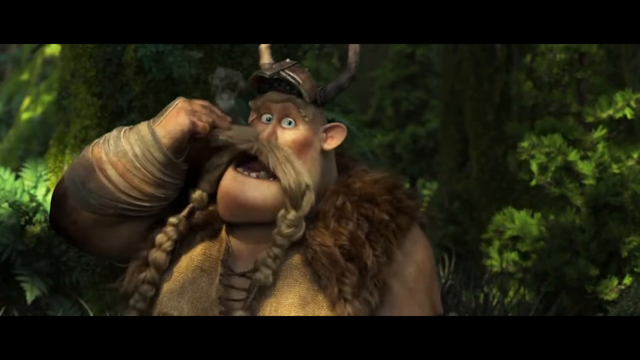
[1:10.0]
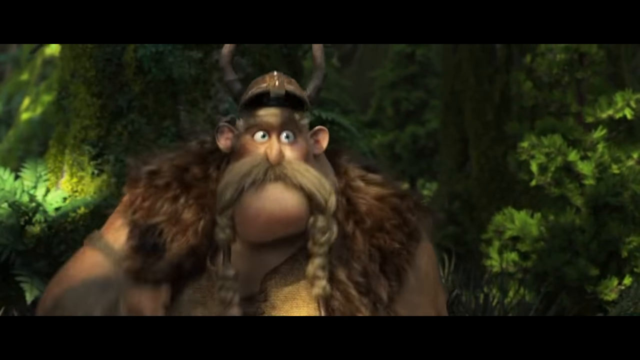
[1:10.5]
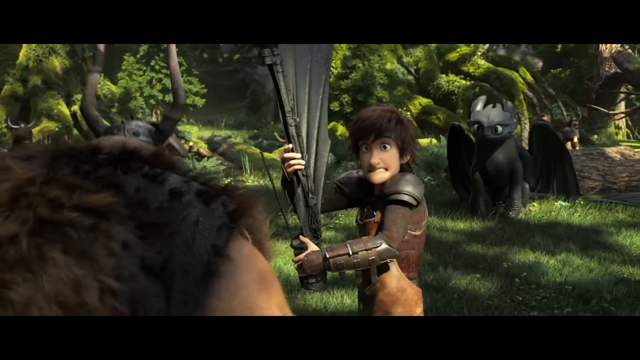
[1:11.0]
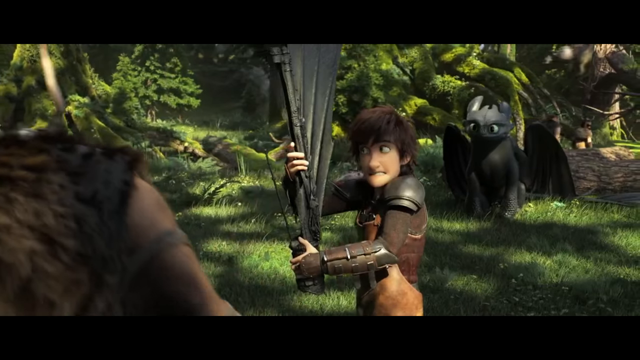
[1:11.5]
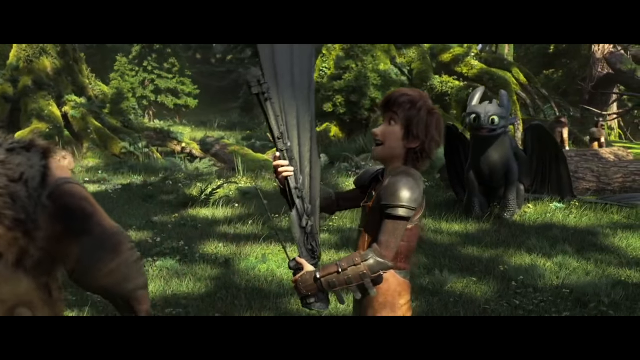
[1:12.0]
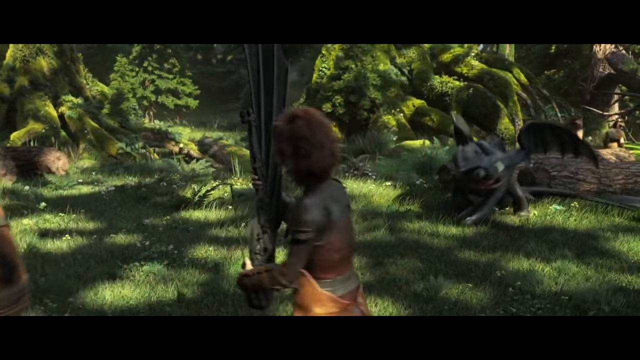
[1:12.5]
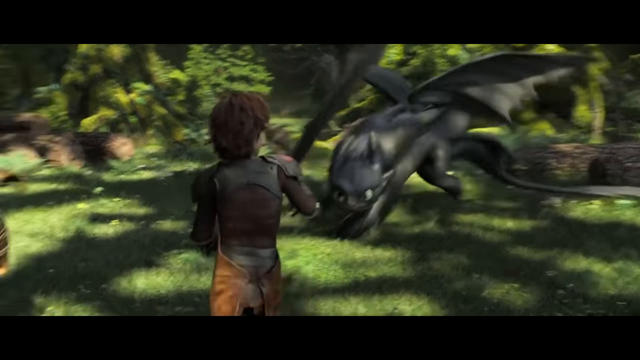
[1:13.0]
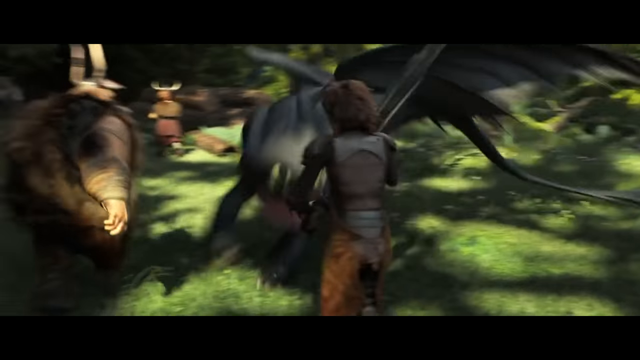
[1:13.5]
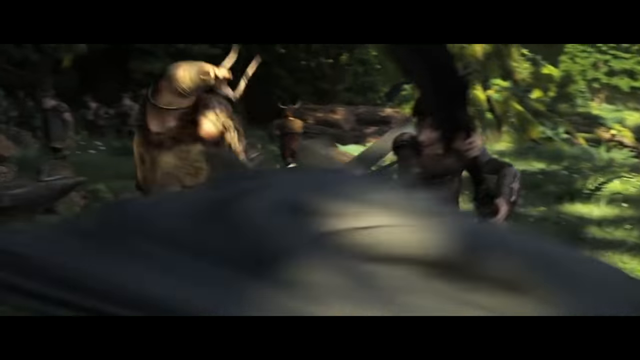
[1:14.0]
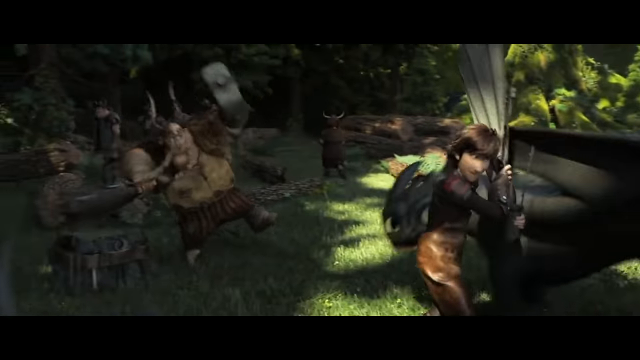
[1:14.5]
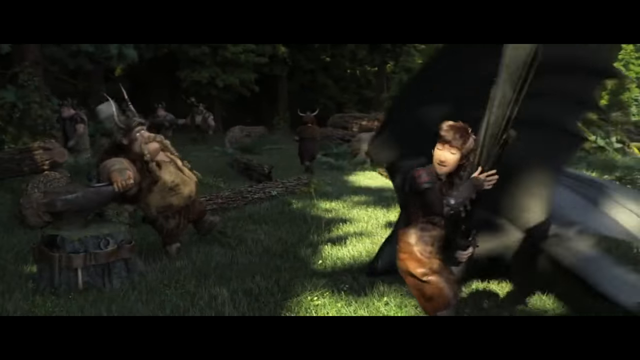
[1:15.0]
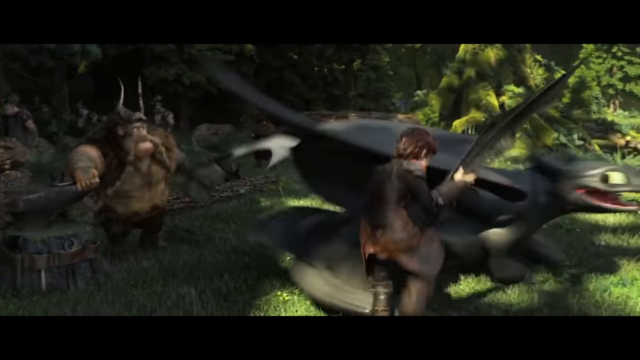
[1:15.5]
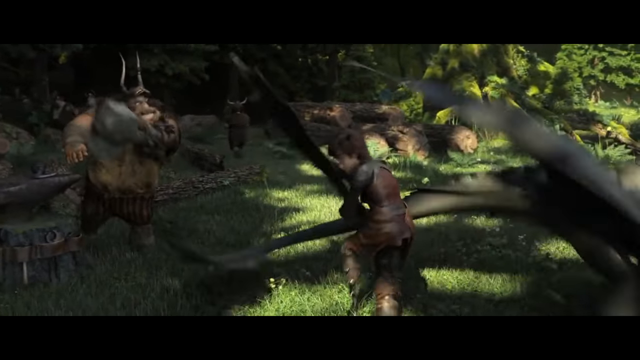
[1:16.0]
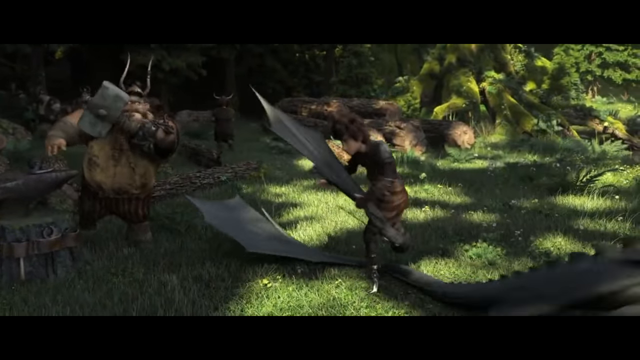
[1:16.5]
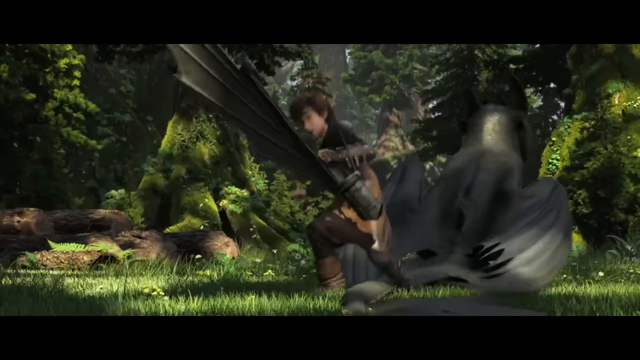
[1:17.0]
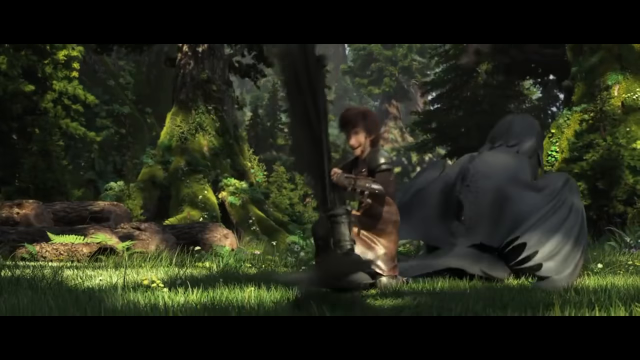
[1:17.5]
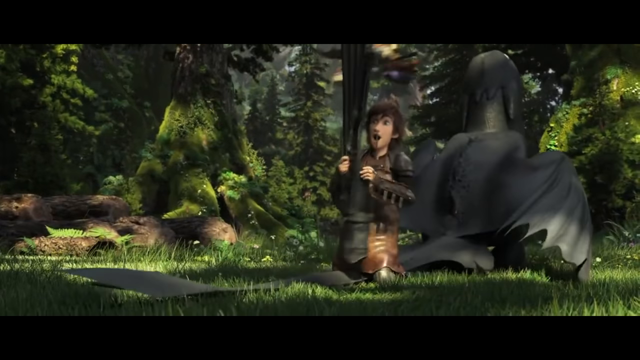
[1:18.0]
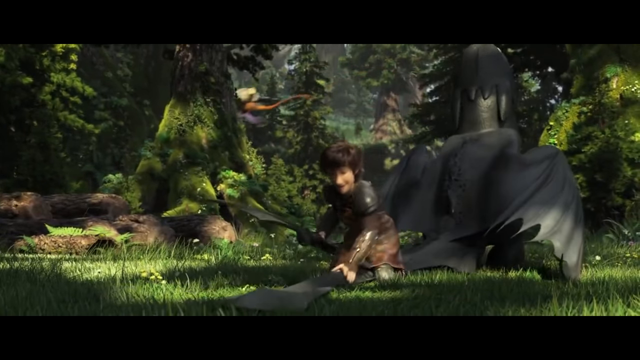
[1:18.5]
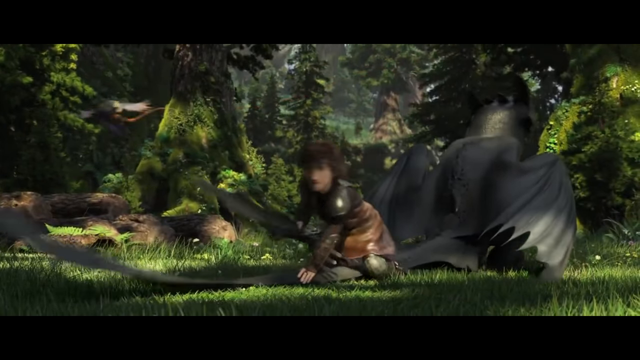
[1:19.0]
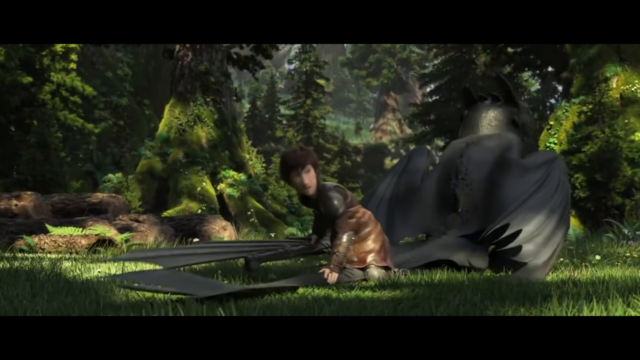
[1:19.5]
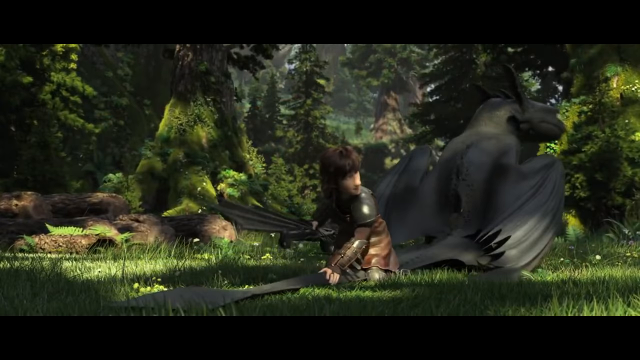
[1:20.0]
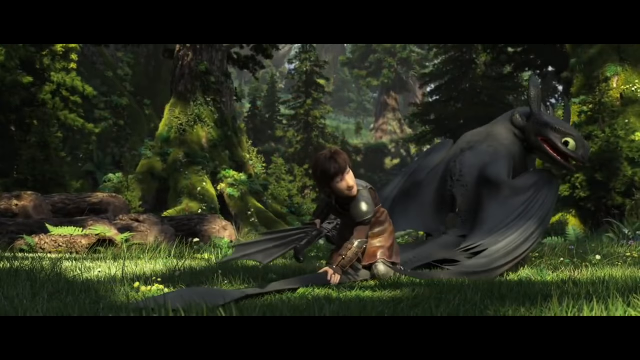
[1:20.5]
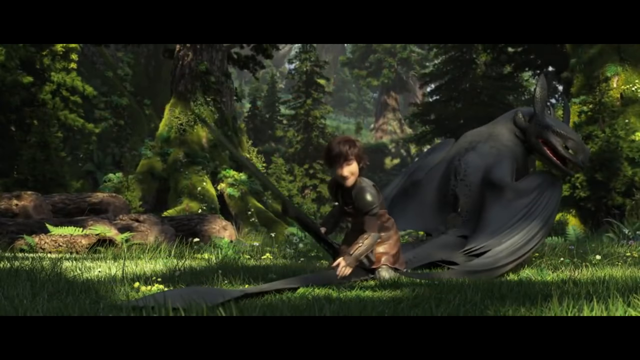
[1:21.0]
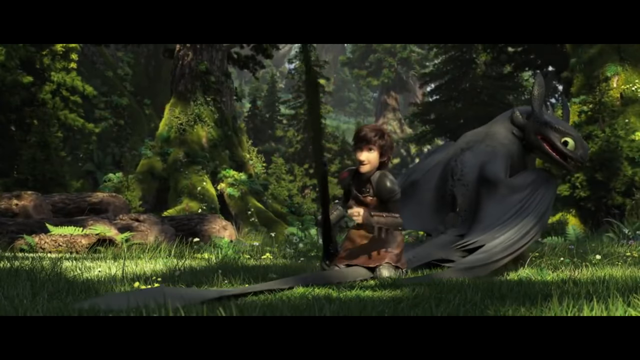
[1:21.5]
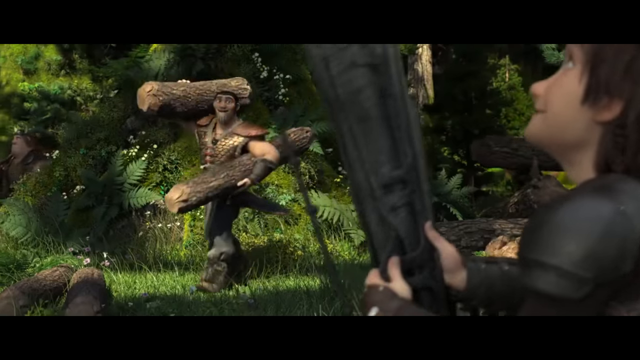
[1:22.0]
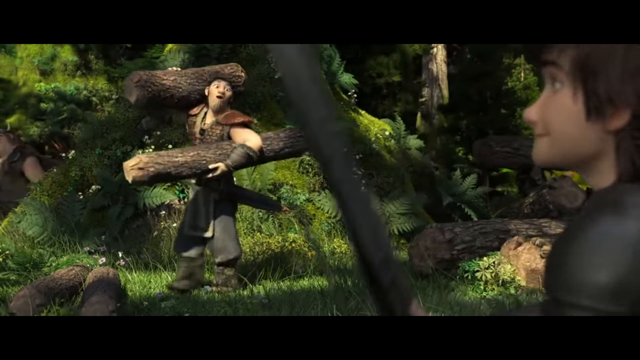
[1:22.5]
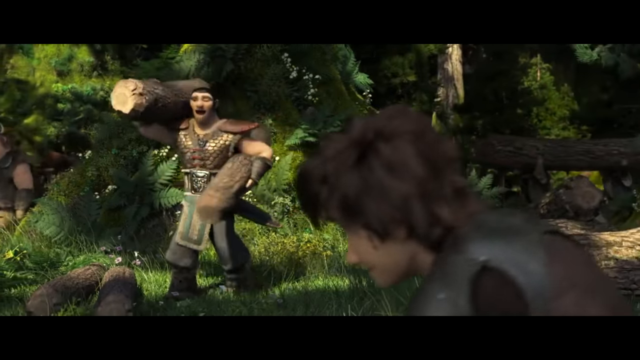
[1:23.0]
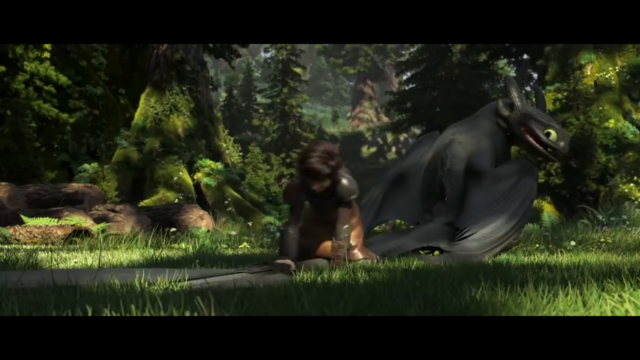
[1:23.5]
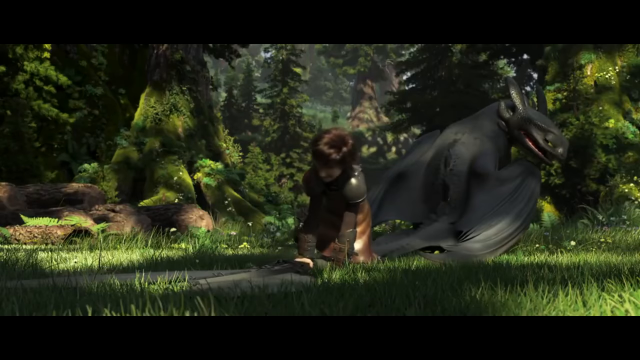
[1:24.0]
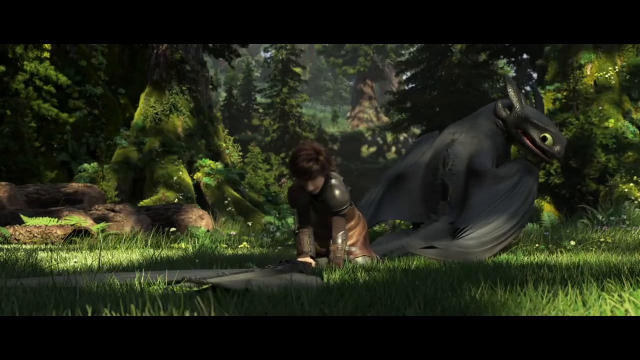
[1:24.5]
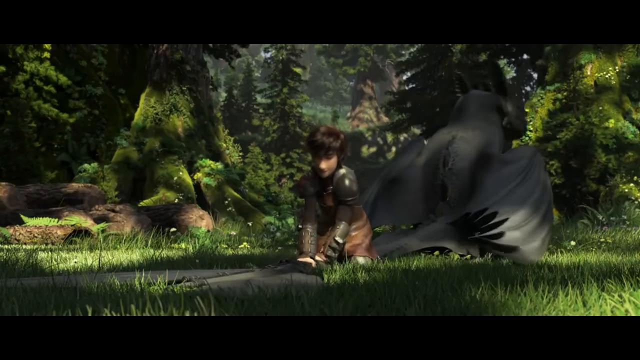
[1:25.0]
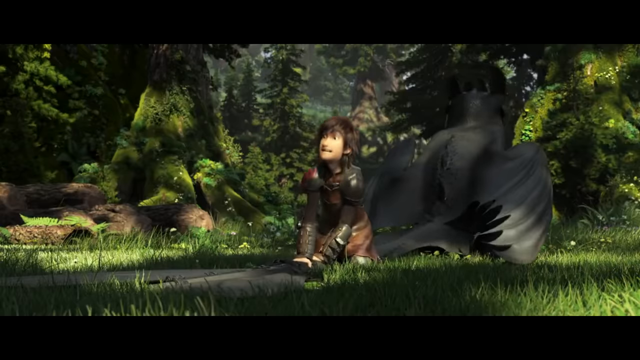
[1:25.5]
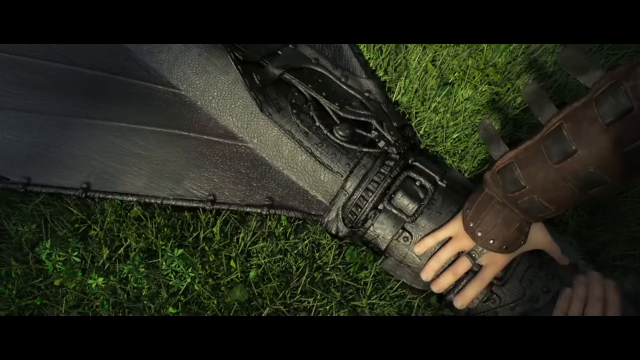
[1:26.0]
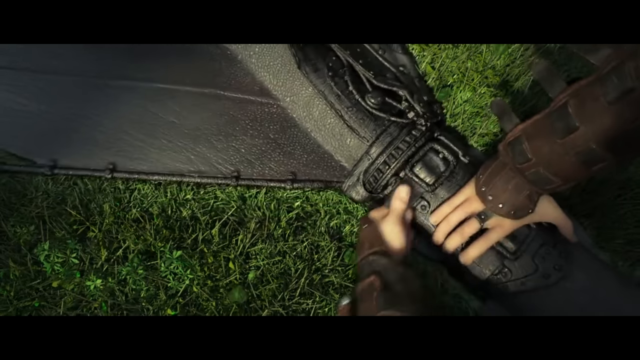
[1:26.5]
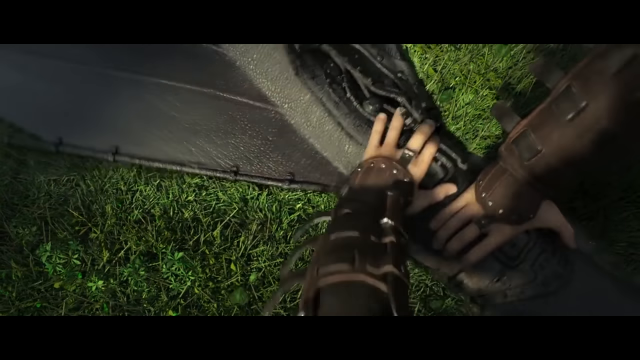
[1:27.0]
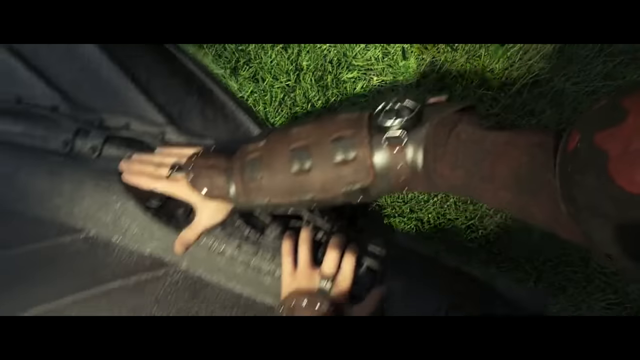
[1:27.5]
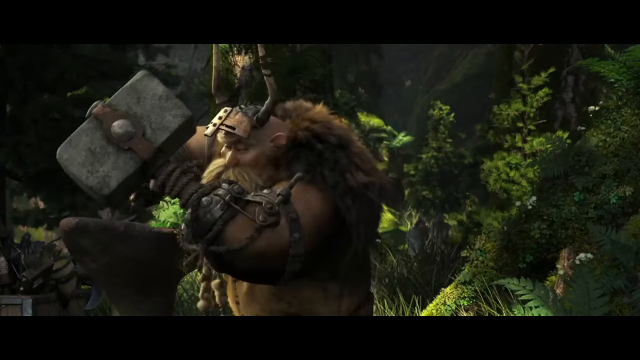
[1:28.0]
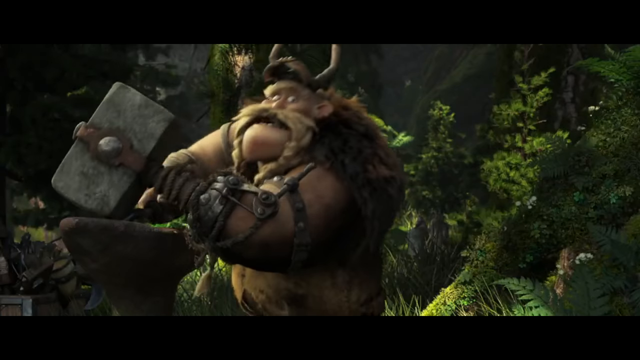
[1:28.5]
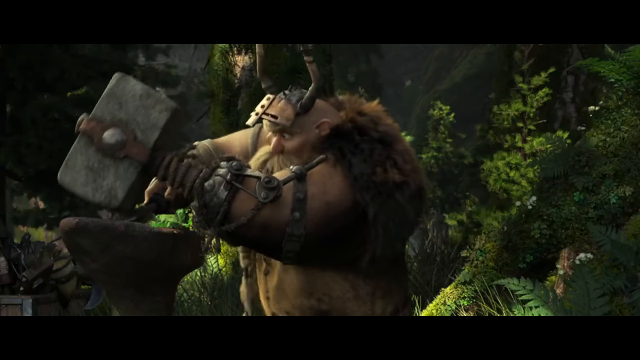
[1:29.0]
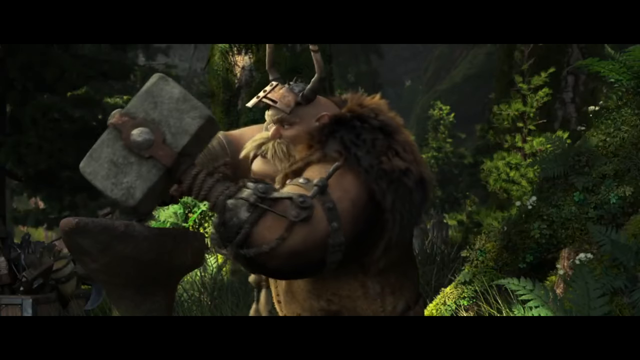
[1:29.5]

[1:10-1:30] The man the dragon just set on fire puts out the last bit of fire on his mustache, which goes down in a braid on each side, using his right hand. He talks, nods his head, and walks off toward the left of the screen to the dragon. He appears to be working on the dragon's tail, clipping another piece on.